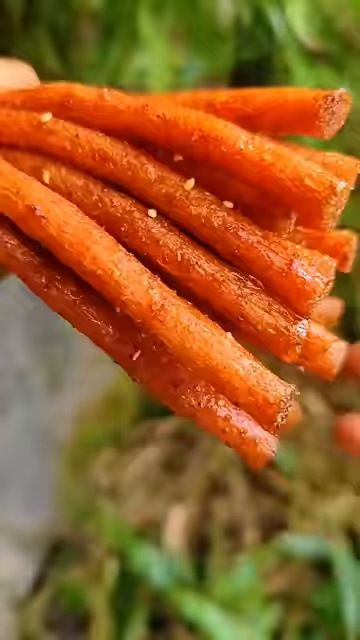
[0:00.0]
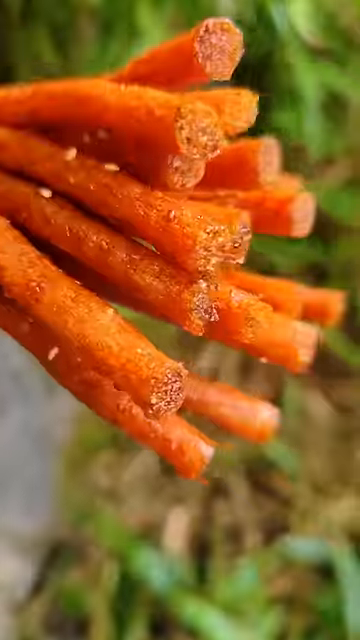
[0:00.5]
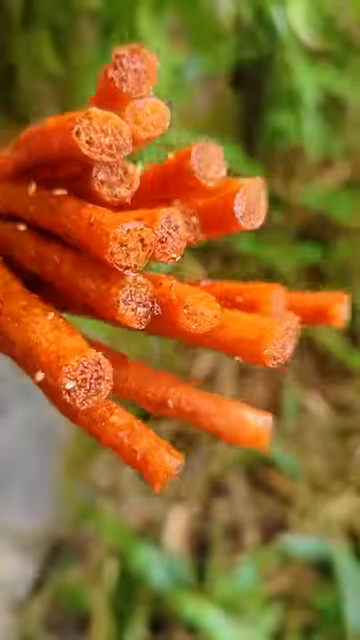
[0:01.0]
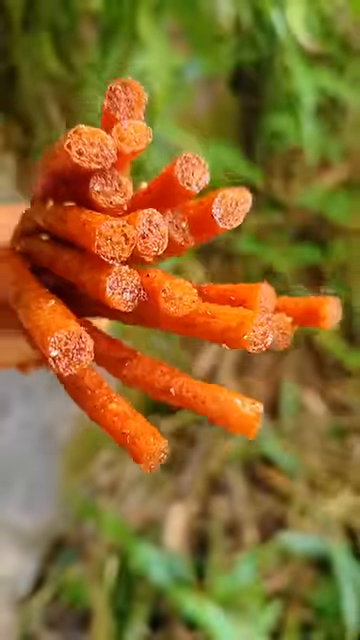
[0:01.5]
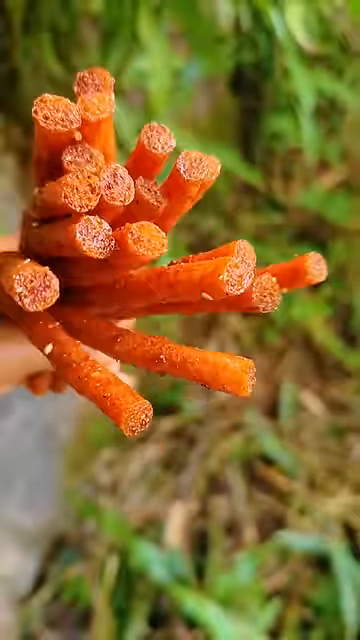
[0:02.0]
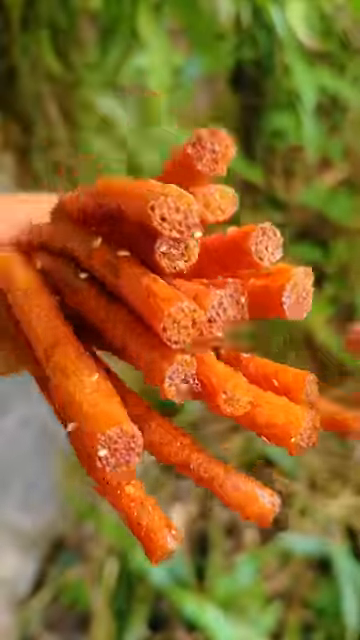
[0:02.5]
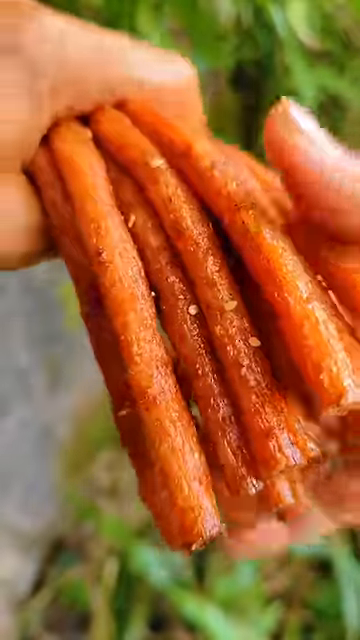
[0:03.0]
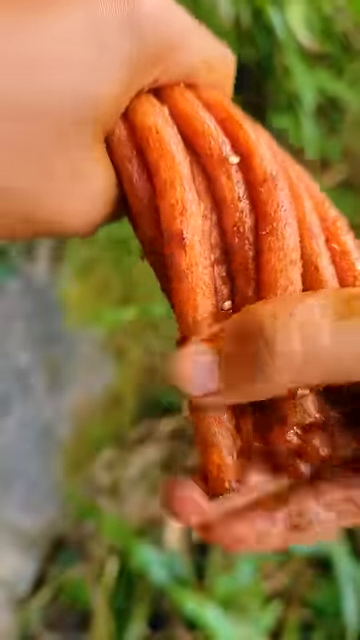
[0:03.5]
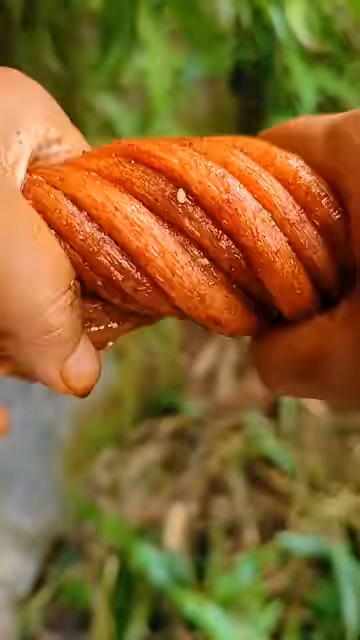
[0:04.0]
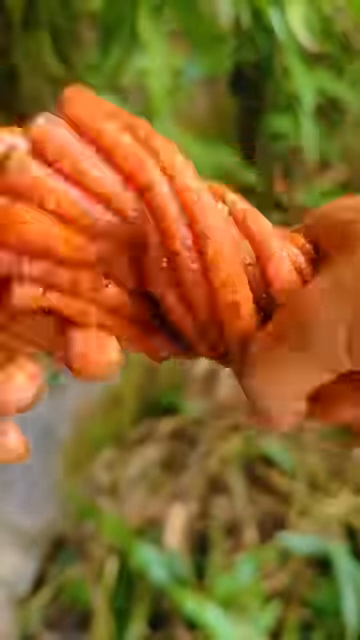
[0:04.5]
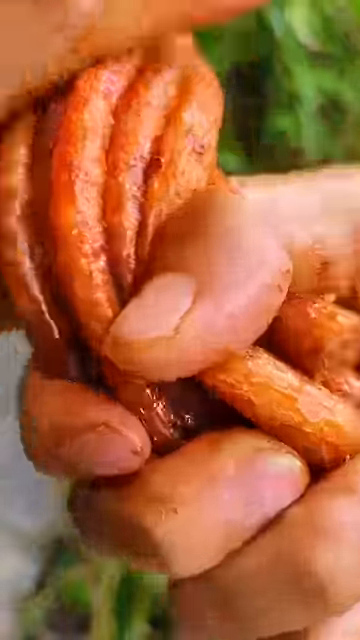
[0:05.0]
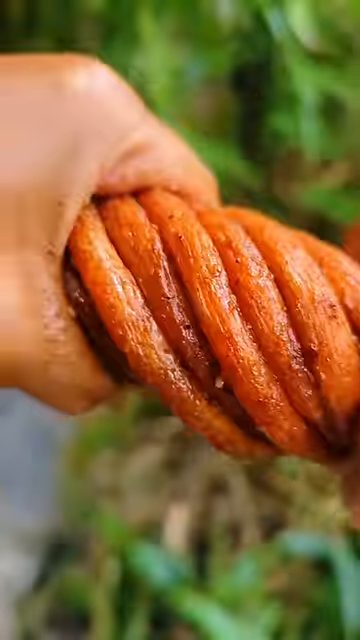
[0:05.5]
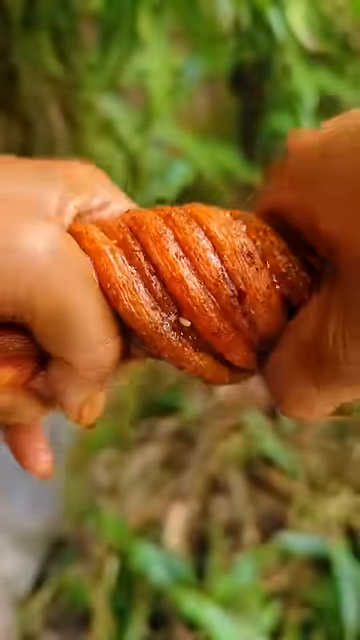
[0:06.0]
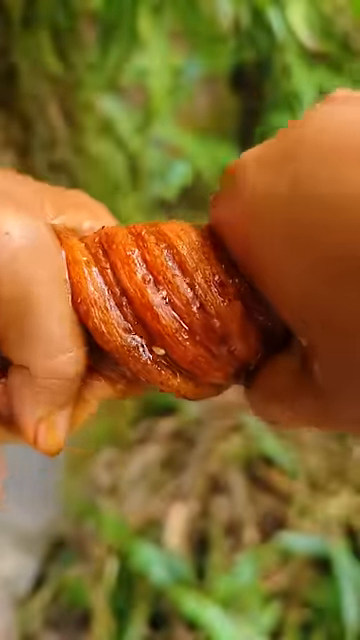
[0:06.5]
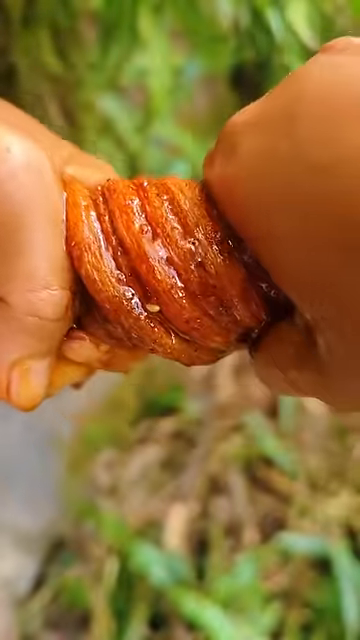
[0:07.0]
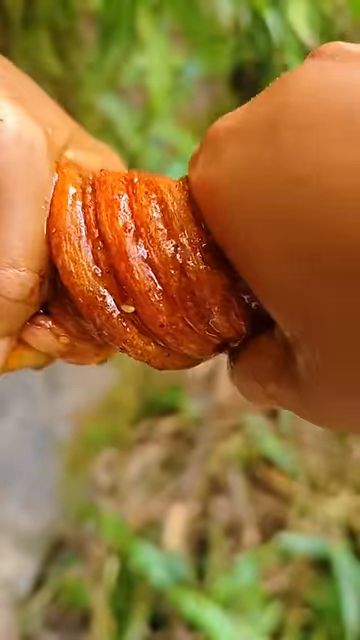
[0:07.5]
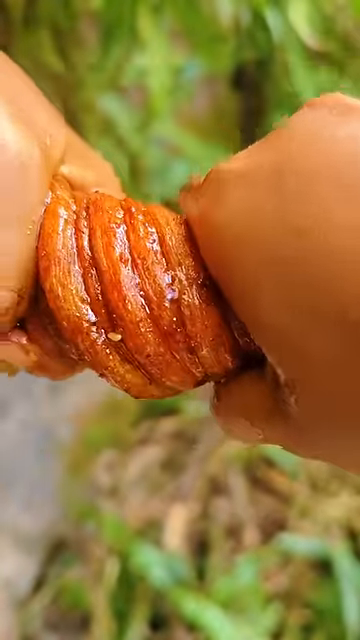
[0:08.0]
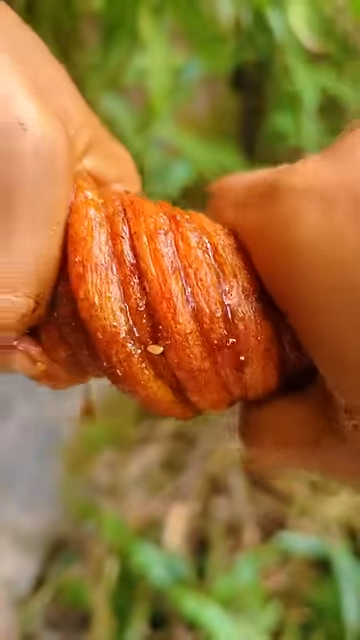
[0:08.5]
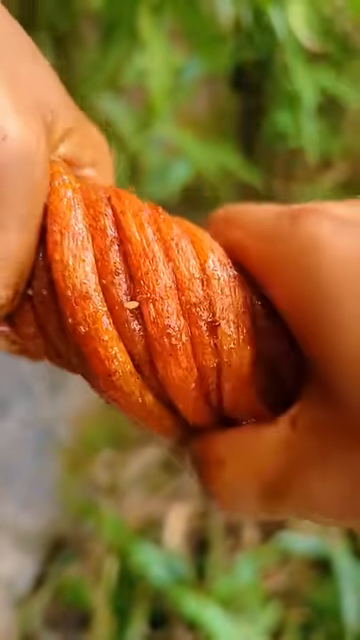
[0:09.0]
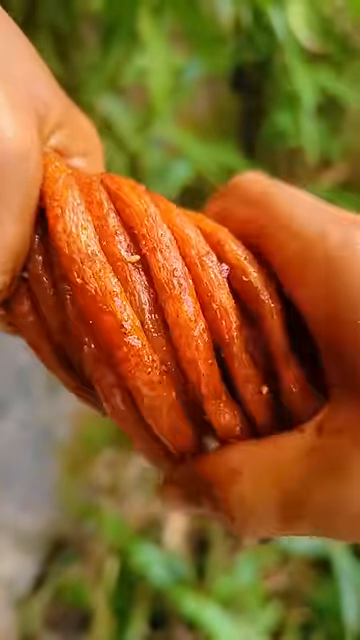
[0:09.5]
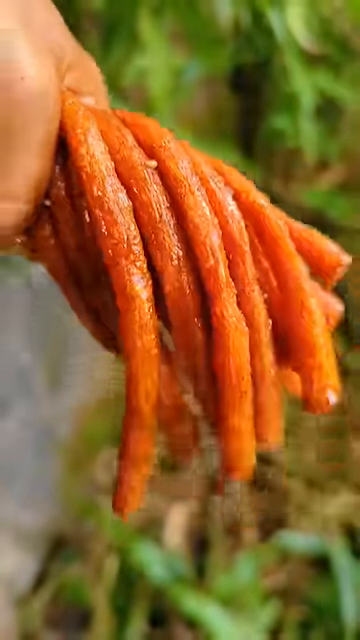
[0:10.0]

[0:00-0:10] A person holds an unidentified object, possibly some kind of vegetable or twine, that looks like a bunch of ropes kind of bunched together and reddish orange in color. Only the sides of their hands are visible, and they seem to be outside, apparently kind of on some grass. At first they grip the object with one hand, and it is roughly parallel to the ground. Then they grip it with two hands and it kind of twists up as they squeeze it as if wringing out a towel. Some sort of reddish liquid starts to come out and kind of drips on the ground.